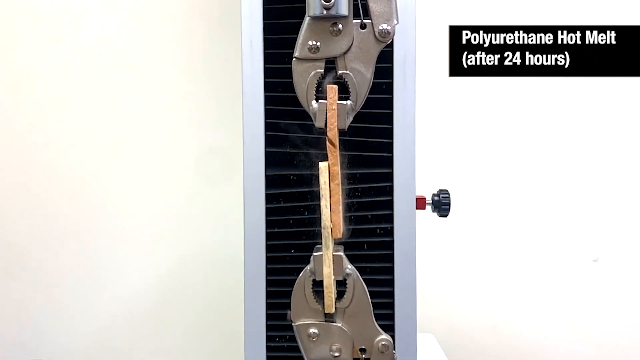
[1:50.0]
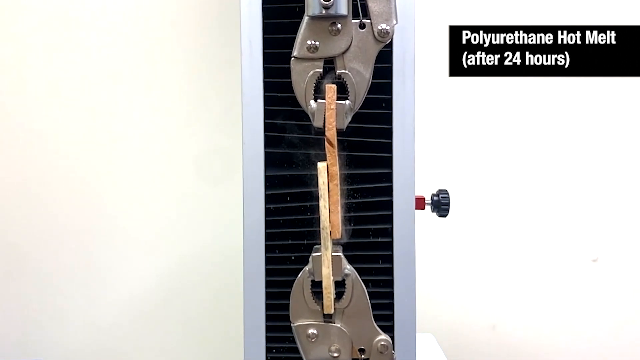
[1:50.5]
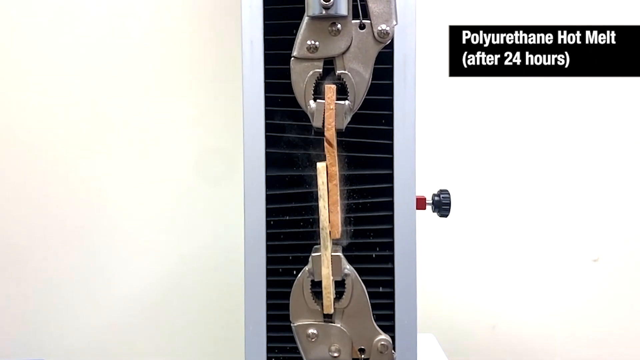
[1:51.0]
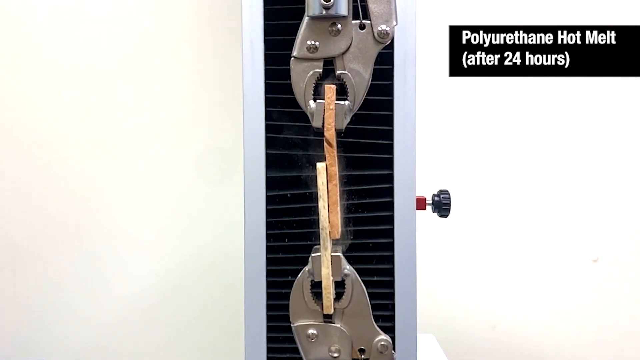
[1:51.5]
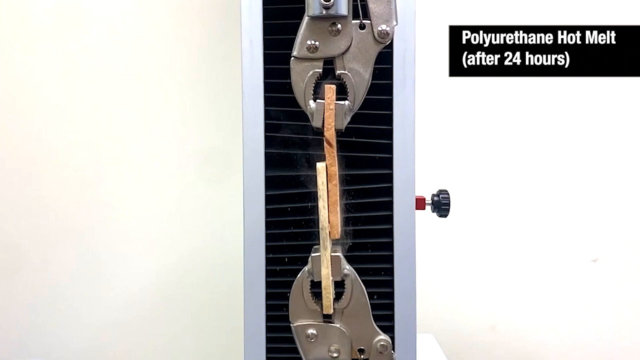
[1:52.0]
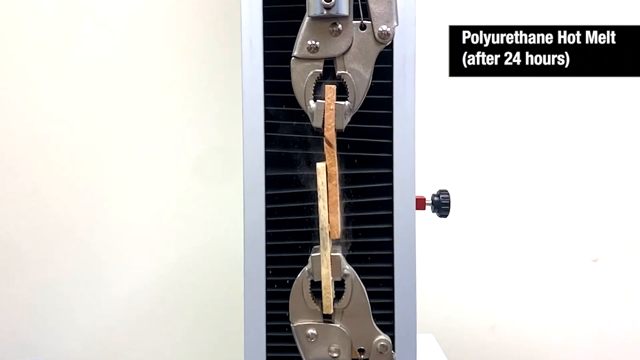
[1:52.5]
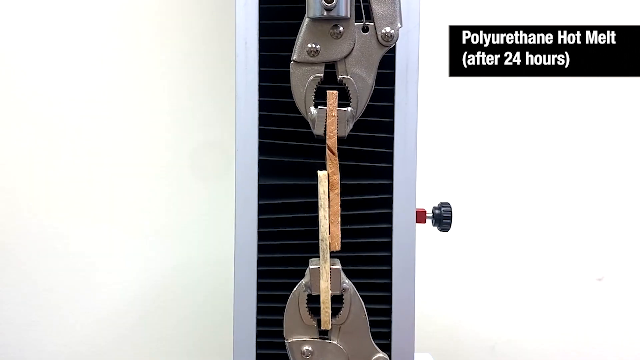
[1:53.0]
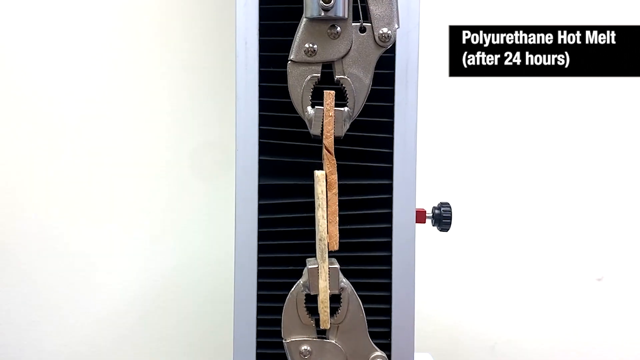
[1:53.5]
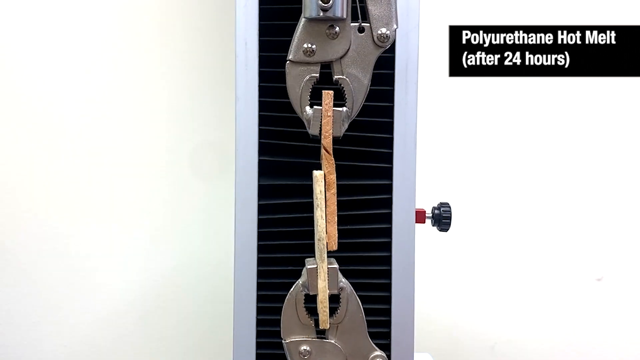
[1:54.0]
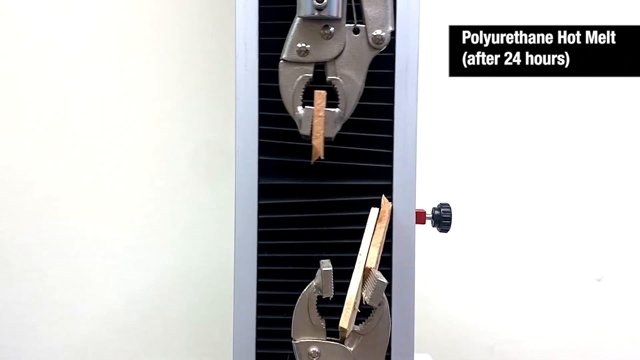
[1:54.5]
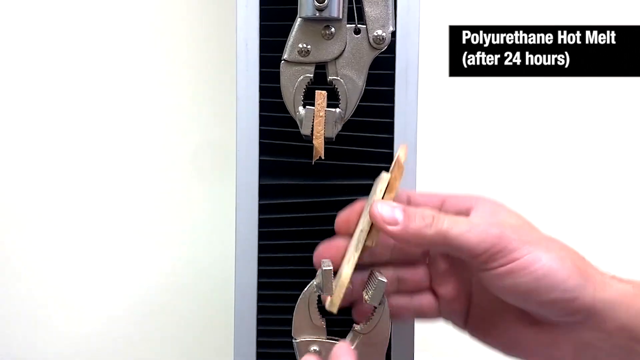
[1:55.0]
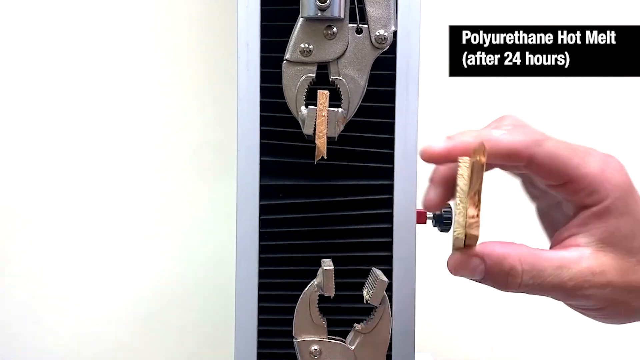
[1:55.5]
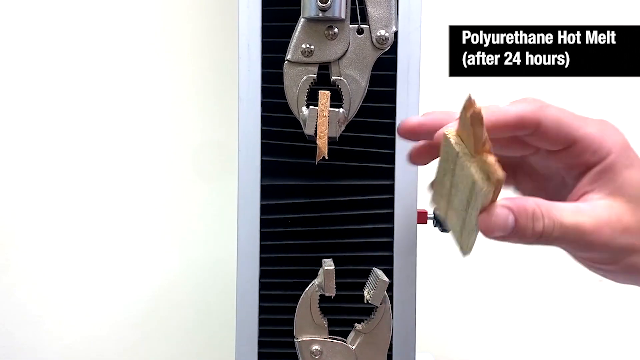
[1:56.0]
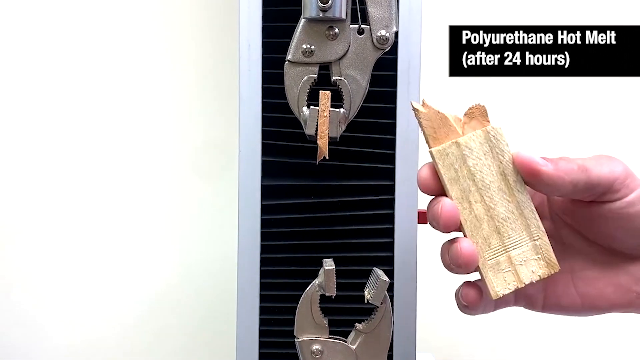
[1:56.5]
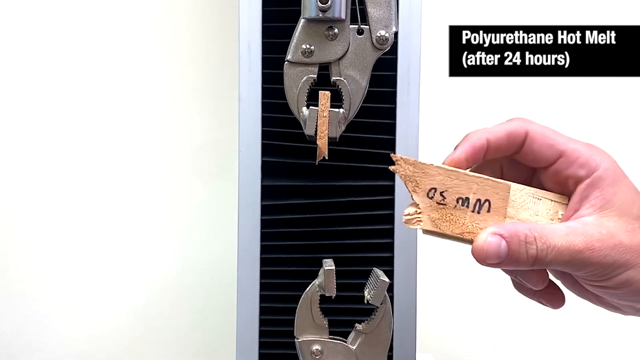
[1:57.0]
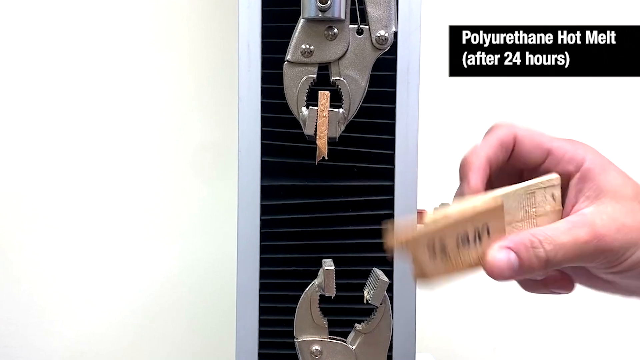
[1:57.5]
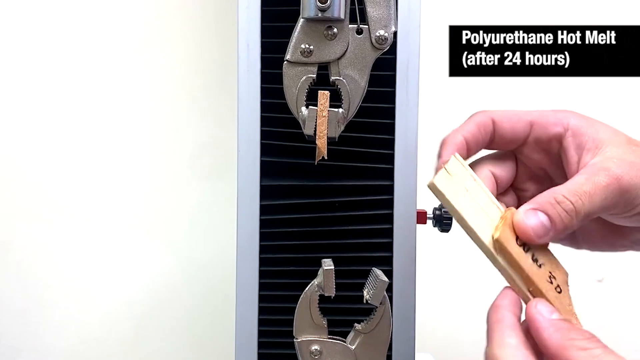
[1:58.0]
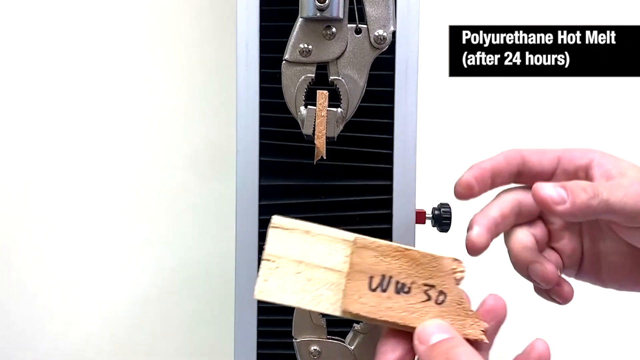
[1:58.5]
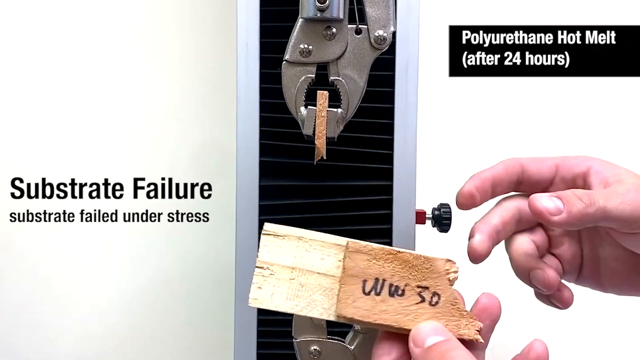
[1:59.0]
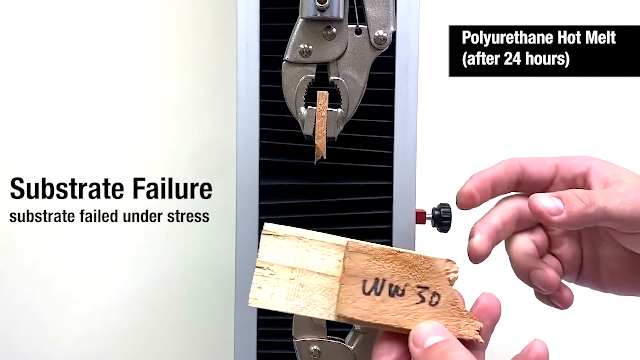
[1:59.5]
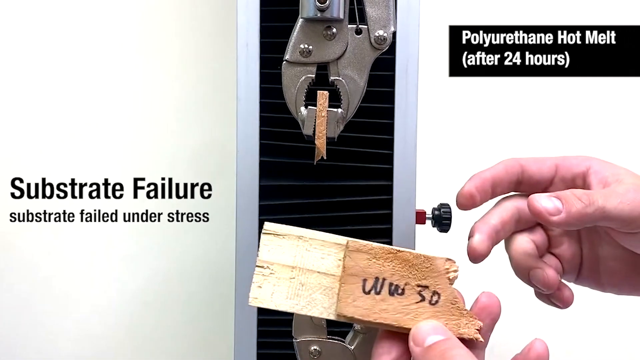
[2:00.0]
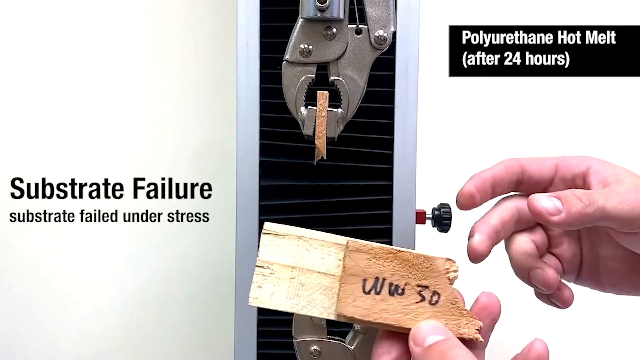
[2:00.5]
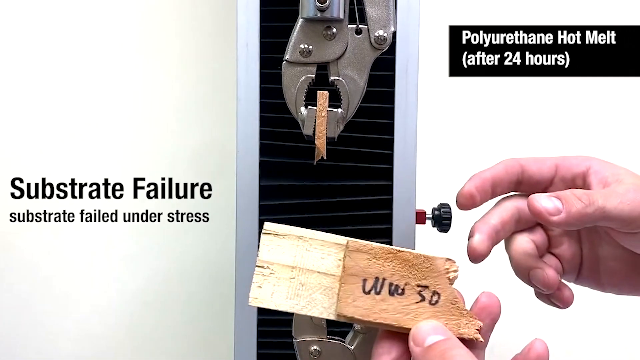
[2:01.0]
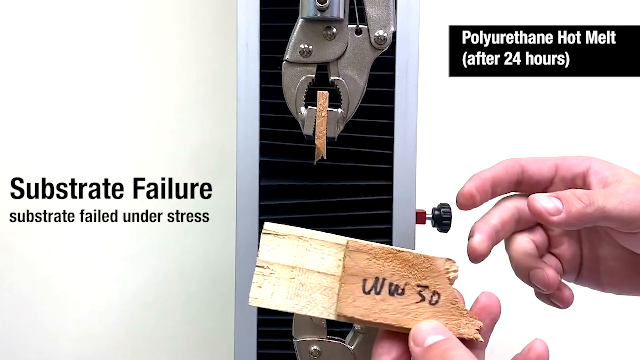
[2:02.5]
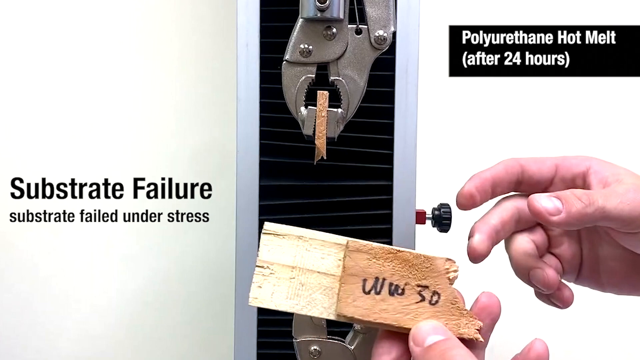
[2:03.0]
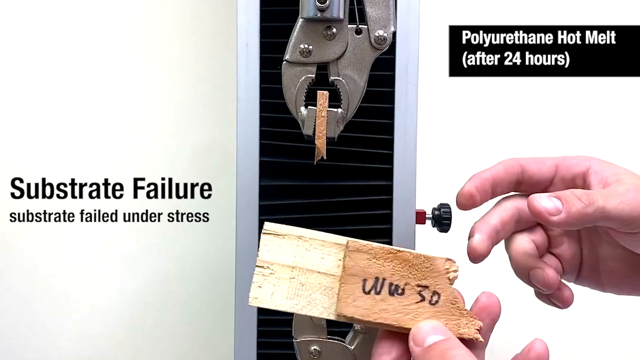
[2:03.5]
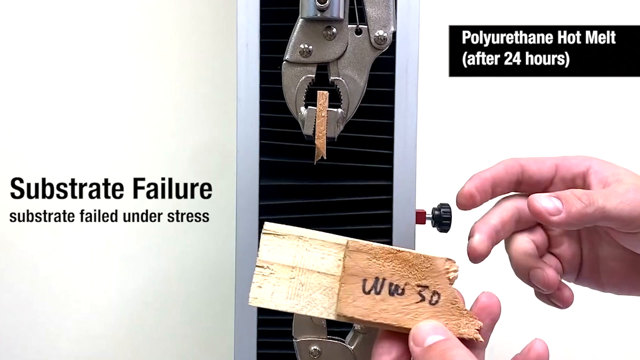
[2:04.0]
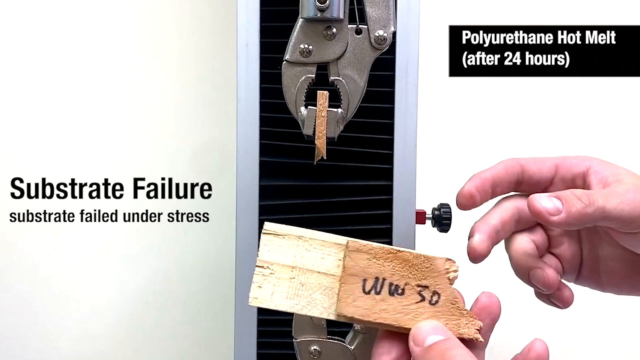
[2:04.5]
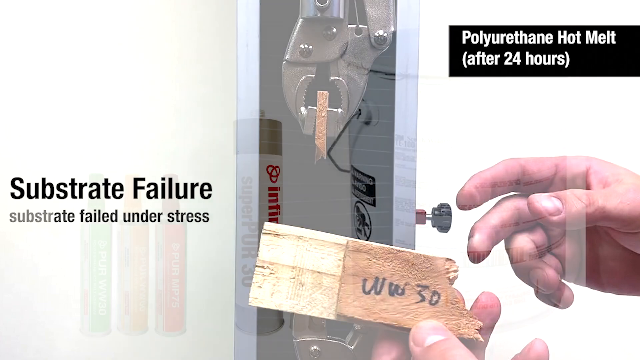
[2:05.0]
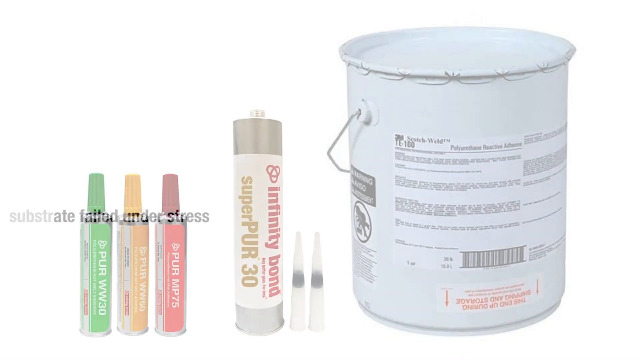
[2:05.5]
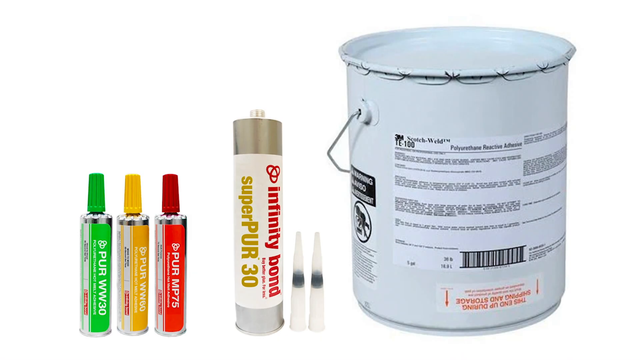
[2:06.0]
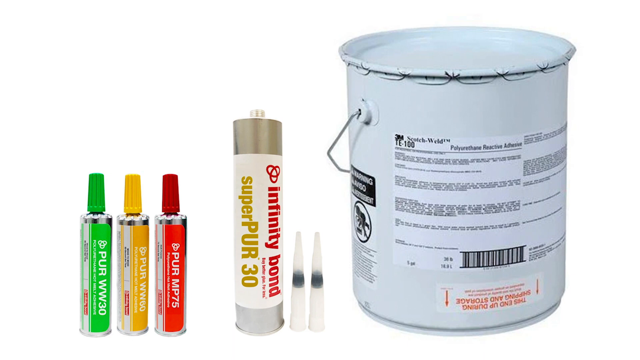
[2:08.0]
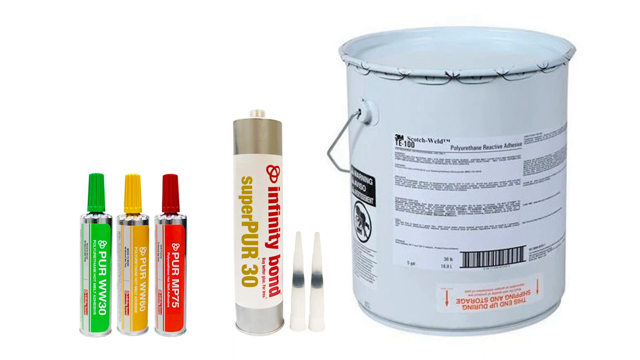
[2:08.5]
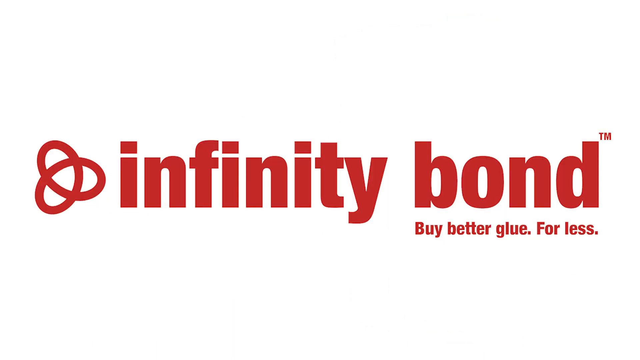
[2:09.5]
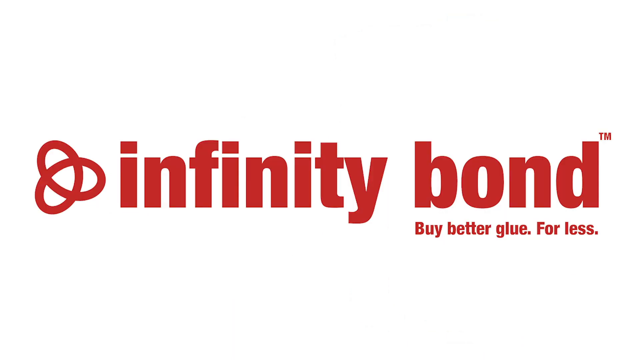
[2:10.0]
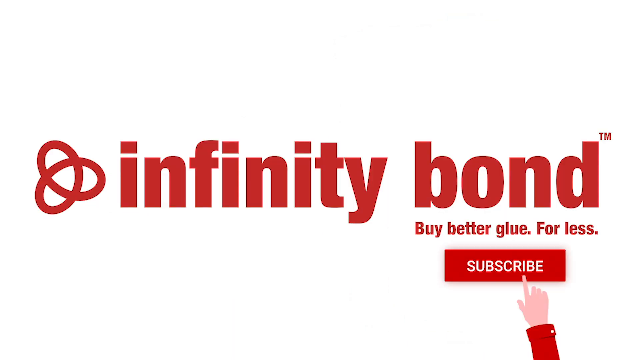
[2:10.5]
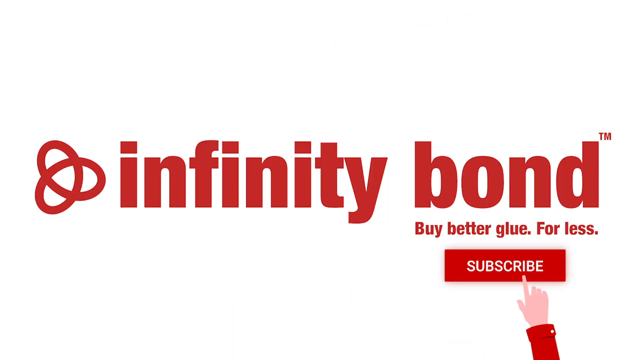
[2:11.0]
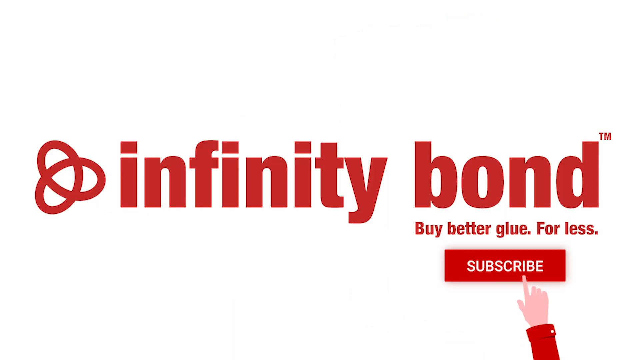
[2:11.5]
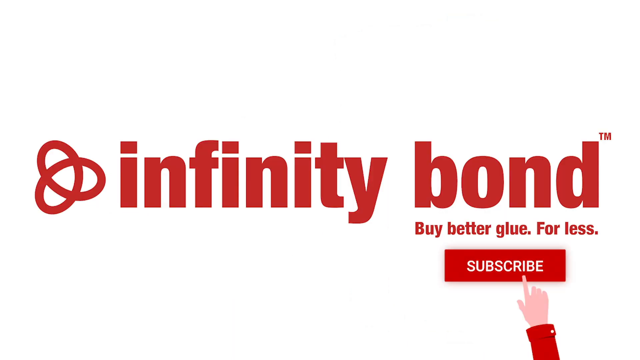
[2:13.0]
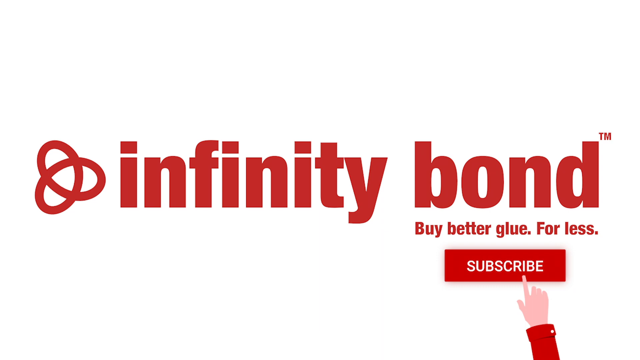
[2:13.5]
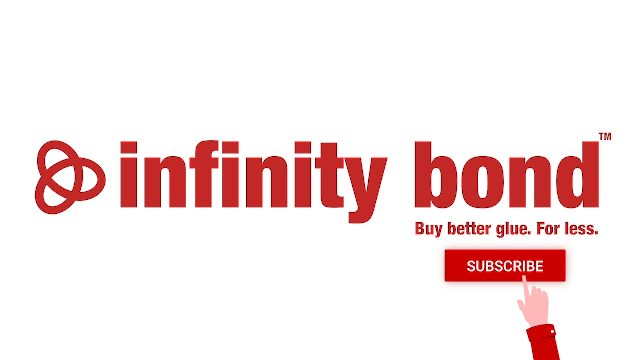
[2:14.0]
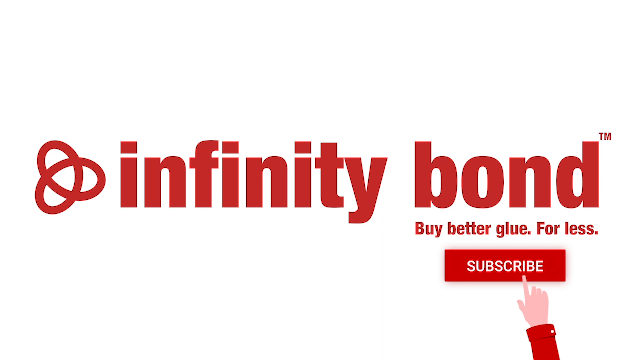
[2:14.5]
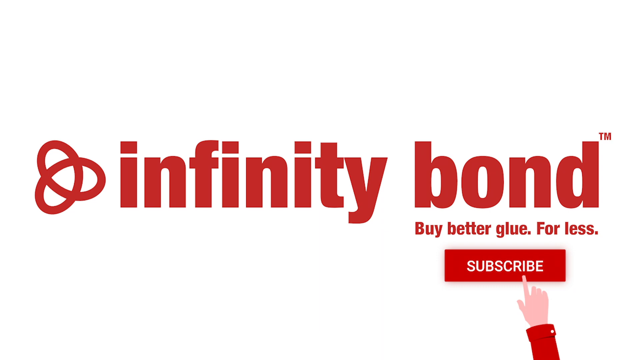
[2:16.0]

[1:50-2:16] The aftermath of a 24-hour machine stress test on polyurethane hot melt is shown: the bond holding the two pieces of wood together remains intact, while the top piece of wood has cracked. A pair of hands comes into frame, grabs the broken piece of wood and turns it front and back to show the camera. The words "substrate failure, substrate failed under stress" appear in black on the left. Finally, the product packaging is shown: a large, pale, cylindrical metal container with a clamped top and a black and white label with a barcode; in the middle, Infinity Bond Super PUR 30 in a long cylindrical plastic container with a pointed screw-on plastic nozzle; and the three smaller red, yellow and green tubes. The words "infinity bond" appear in red with a logo that looks like a three-blade propeller on the left, along with the catchphrase "buy better glue for less" in smaller letters.